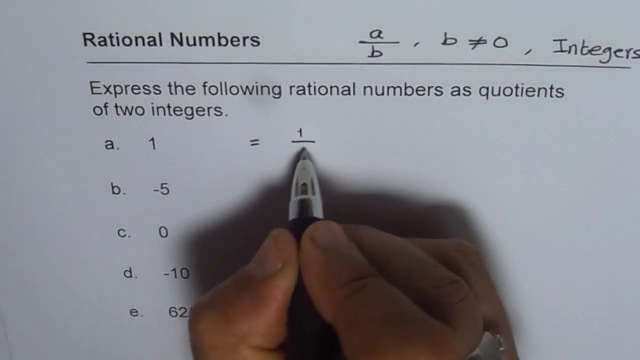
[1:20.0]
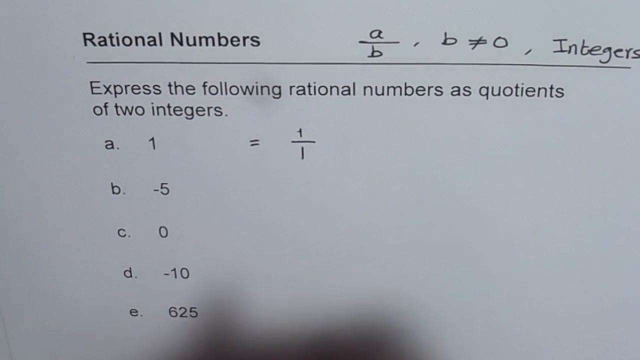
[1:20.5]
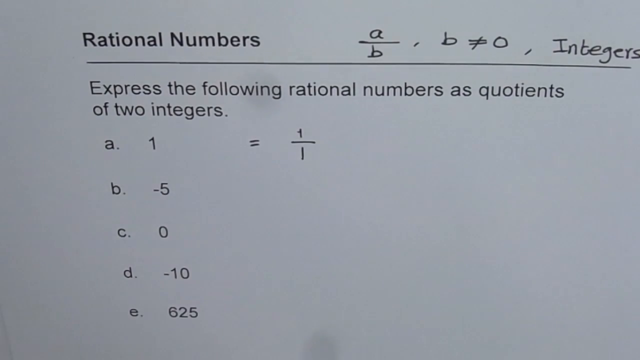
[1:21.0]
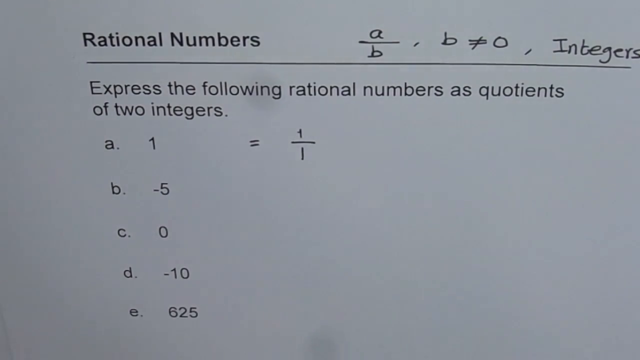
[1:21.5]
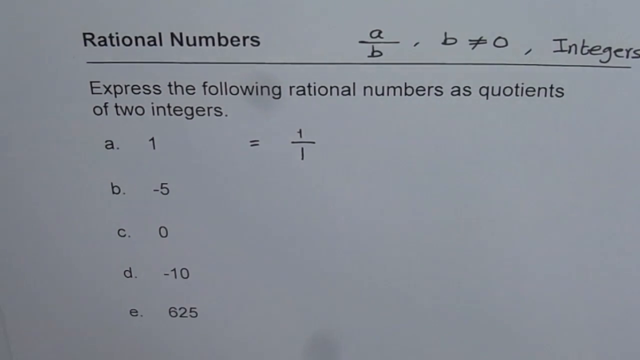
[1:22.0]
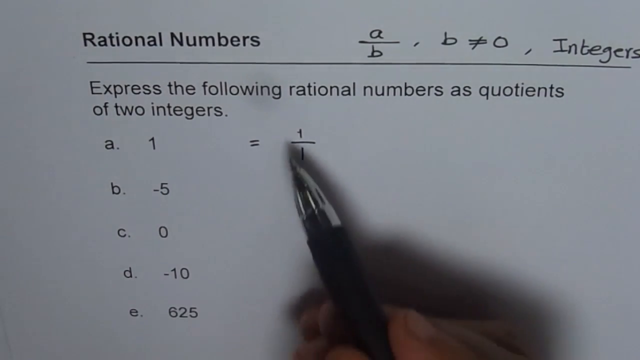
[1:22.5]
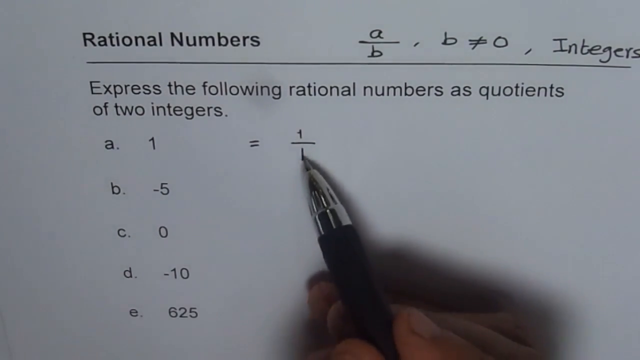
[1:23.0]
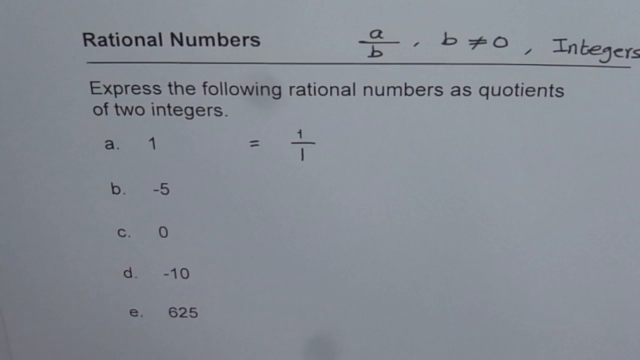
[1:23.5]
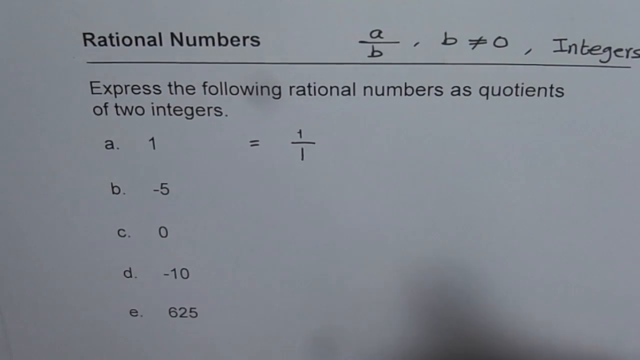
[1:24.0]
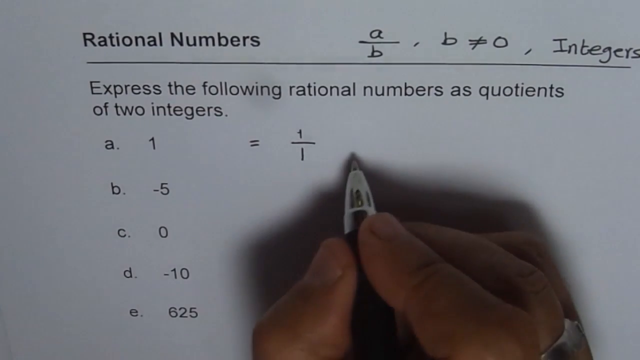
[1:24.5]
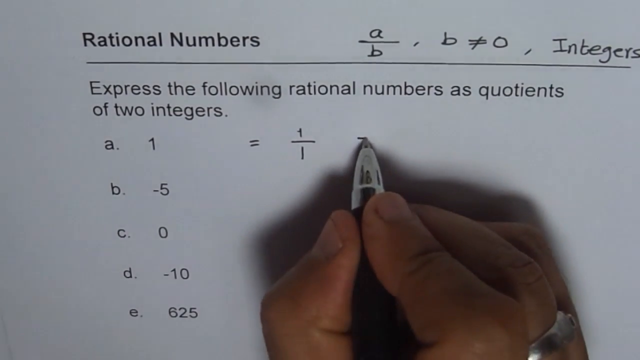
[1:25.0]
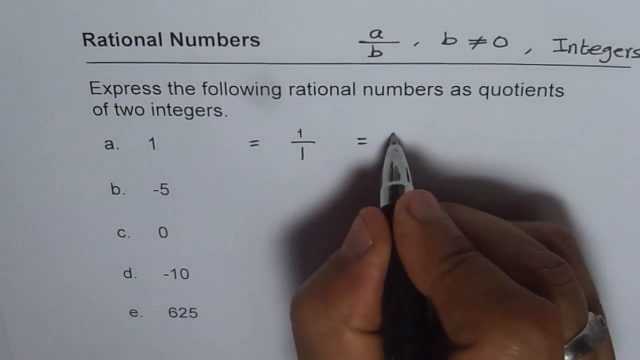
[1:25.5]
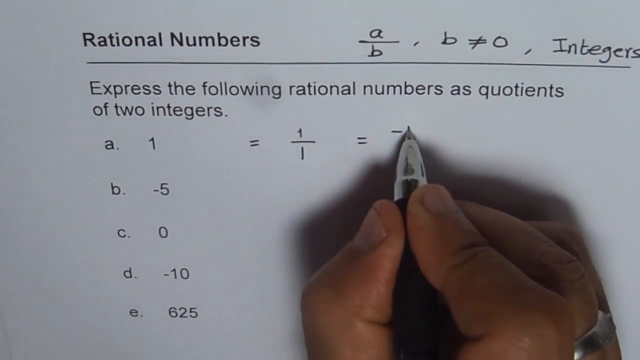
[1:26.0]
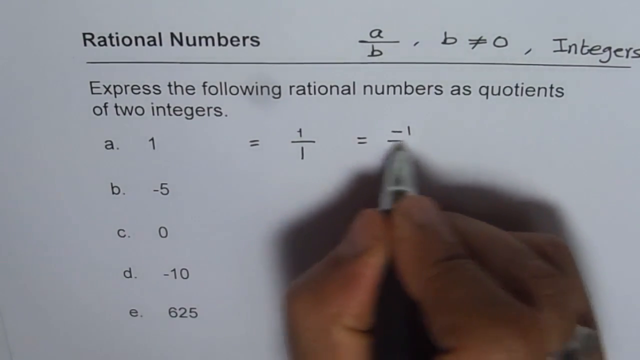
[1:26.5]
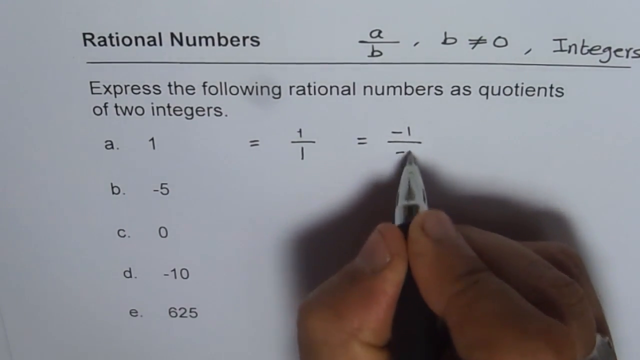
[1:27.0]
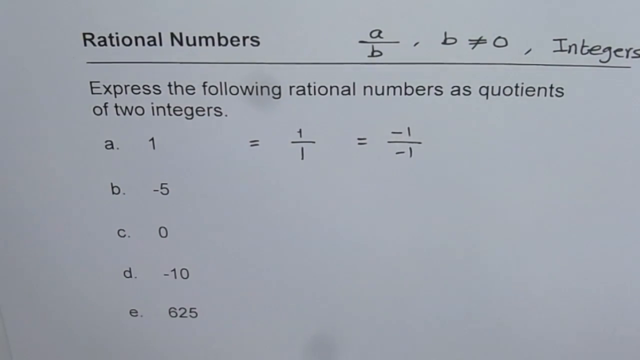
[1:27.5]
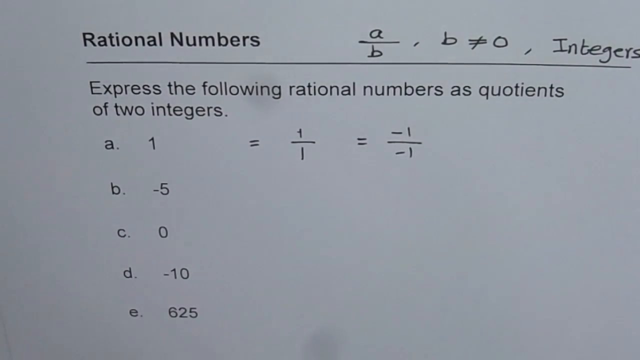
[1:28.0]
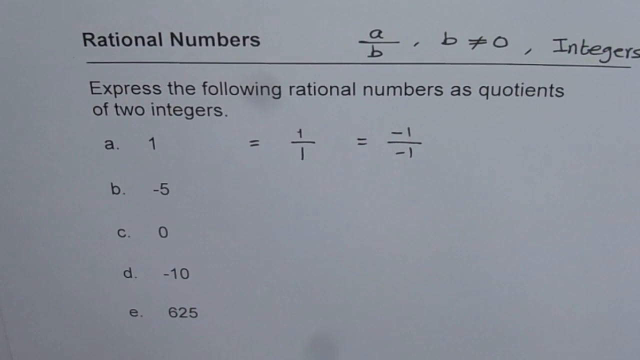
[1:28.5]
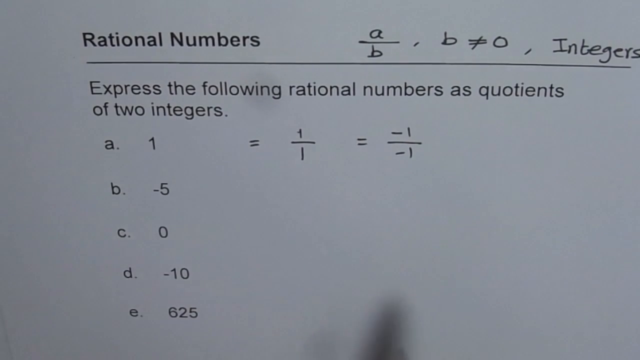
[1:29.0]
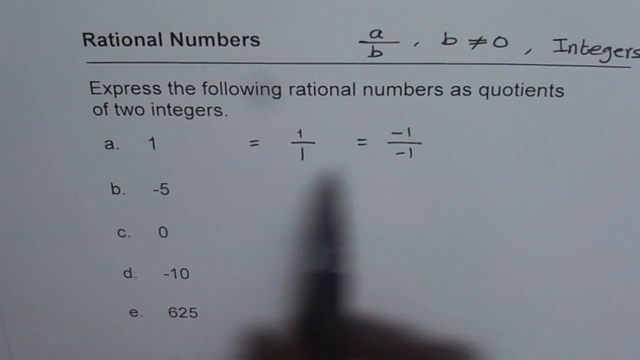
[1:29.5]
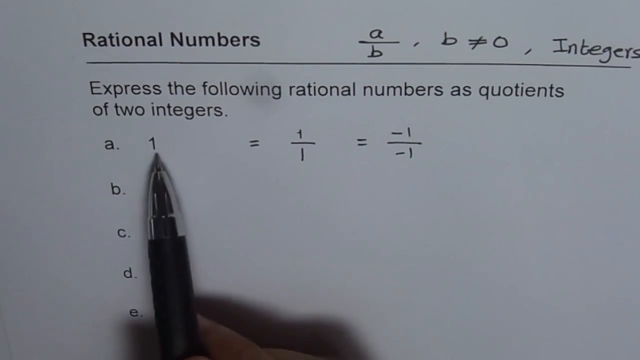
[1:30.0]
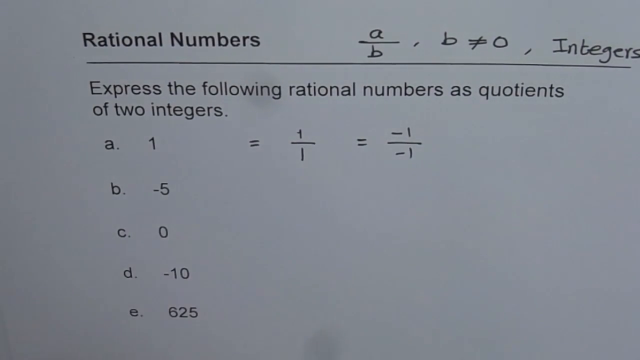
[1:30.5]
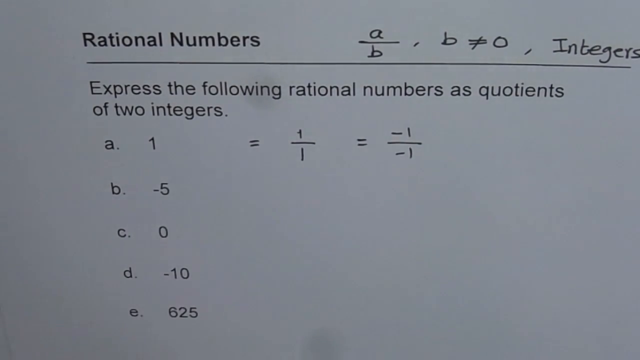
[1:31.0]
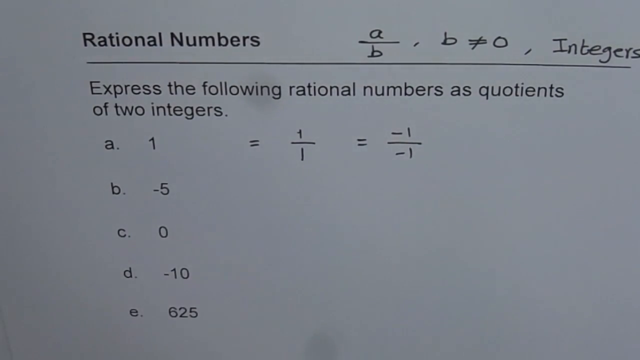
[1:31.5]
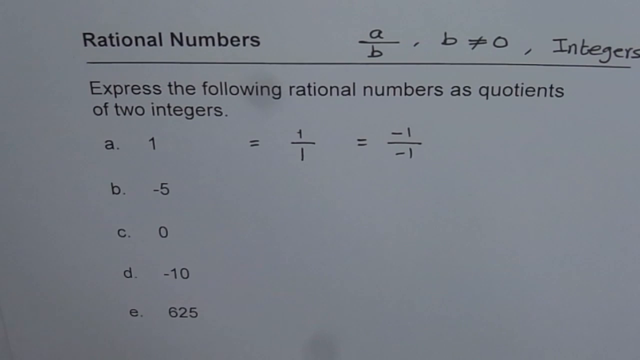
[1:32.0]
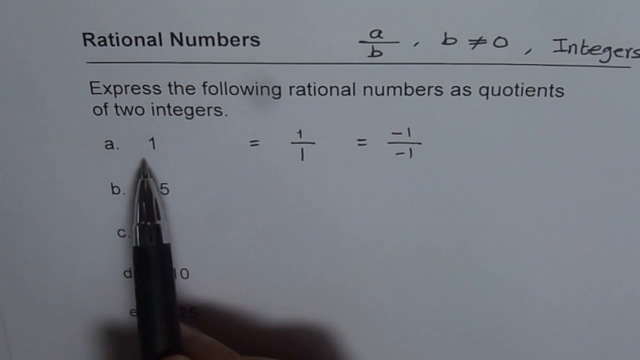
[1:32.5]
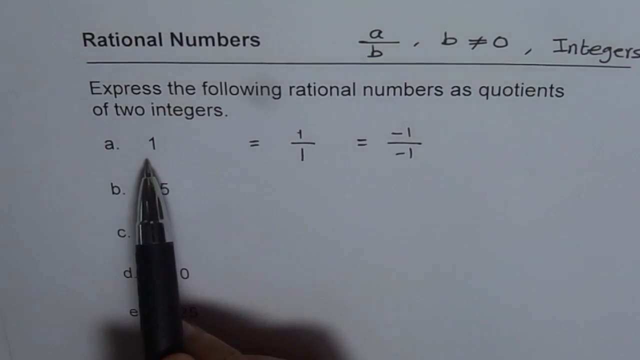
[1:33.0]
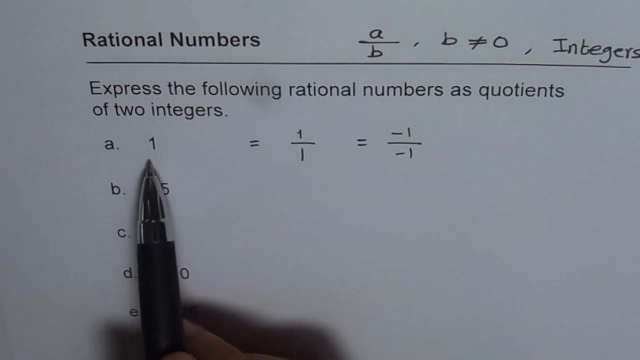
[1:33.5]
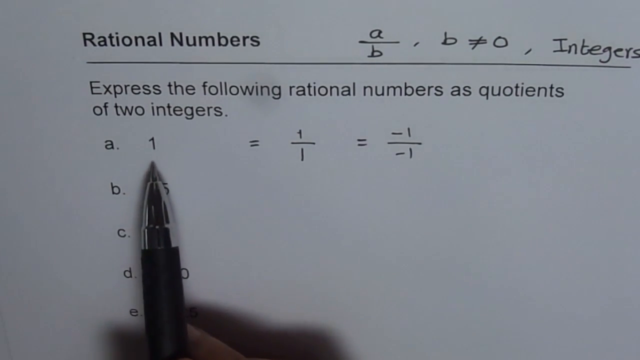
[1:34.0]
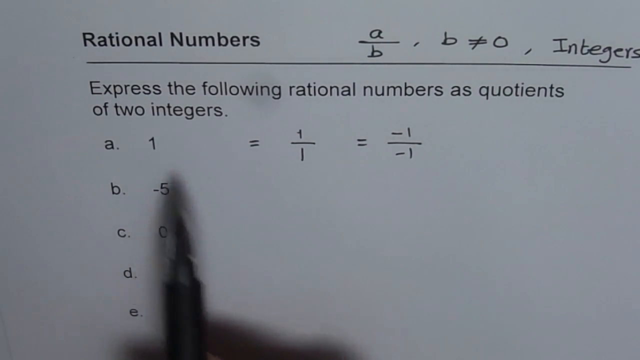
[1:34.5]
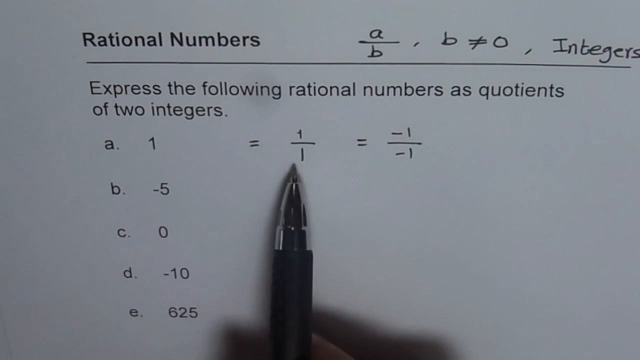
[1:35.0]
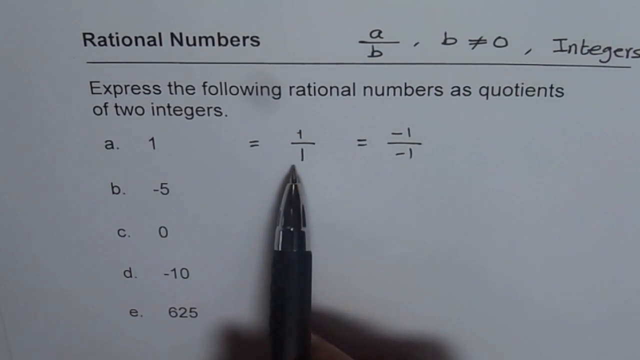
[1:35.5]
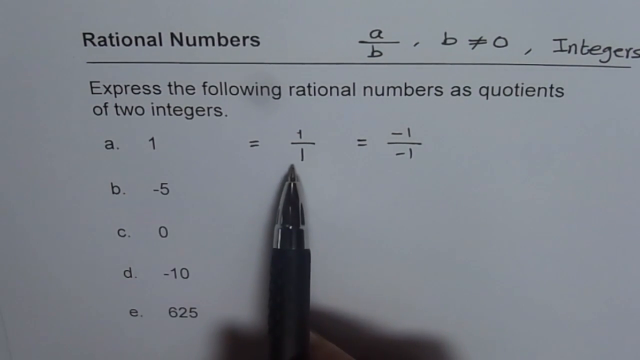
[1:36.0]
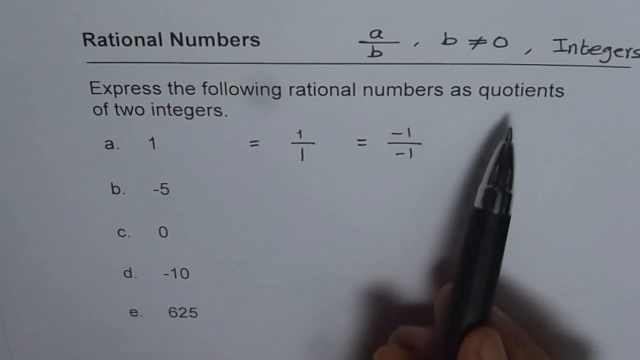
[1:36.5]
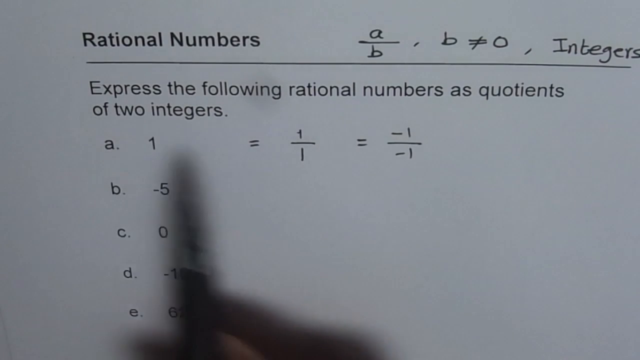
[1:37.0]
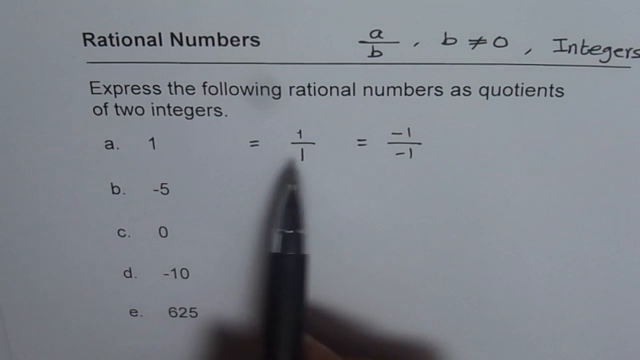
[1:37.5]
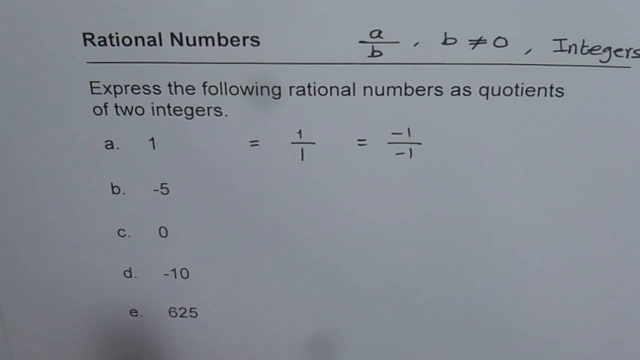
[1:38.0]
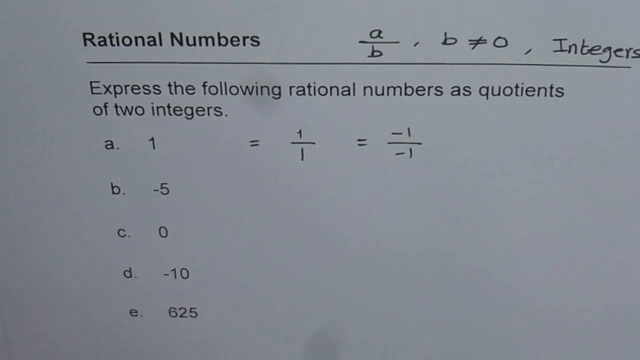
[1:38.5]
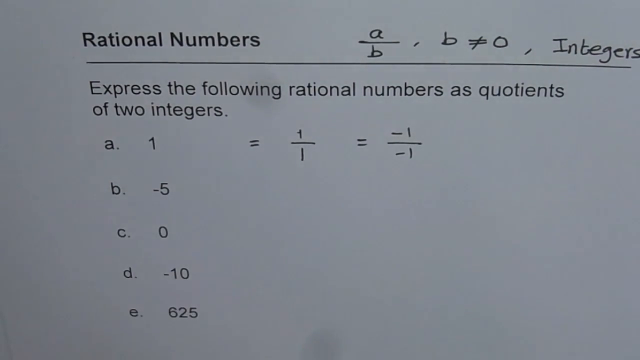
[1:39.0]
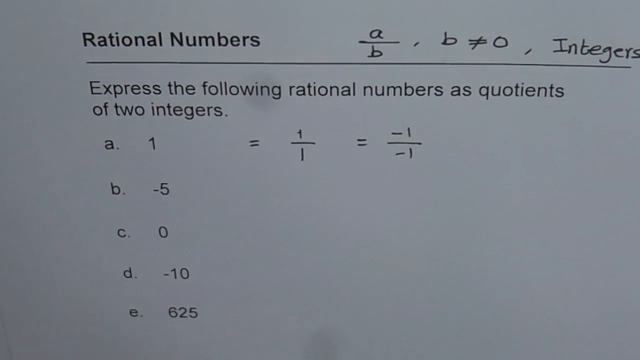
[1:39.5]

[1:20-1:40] The hand holding the pen is visible in the middle at the bottom of the frame. The pen is held between the thumb and index finger and rests on the middle finger. Only the upper half of the hand is visible, with the thumb and index finger tilted to the top and the pen in the middle, viewed from above. A shadow of the hand appears slightly above the hand itself, while the shadow of the pen stays underneath the pen, with only a very tiny tip of it visible just above the pen. The person writes one over one, then taps the numbers with the pen. He writes another equals sign and then minus one over minus one, moves the hand out of the image, and brings it back, pointing to the minus one, then the one over one, and then back to the one. He indicates from the one to the one over one to the word "quotients" on the page.